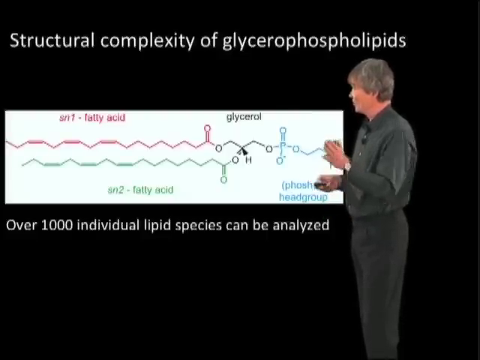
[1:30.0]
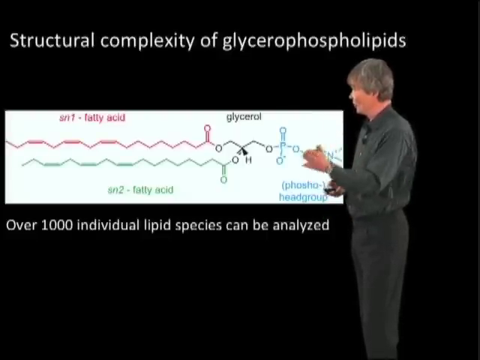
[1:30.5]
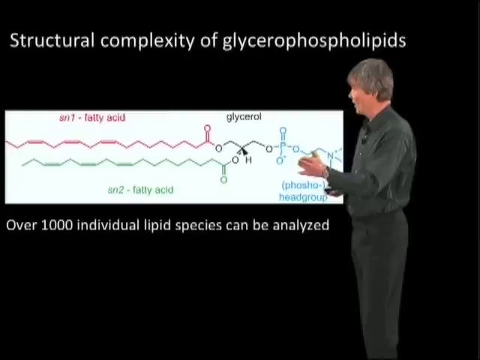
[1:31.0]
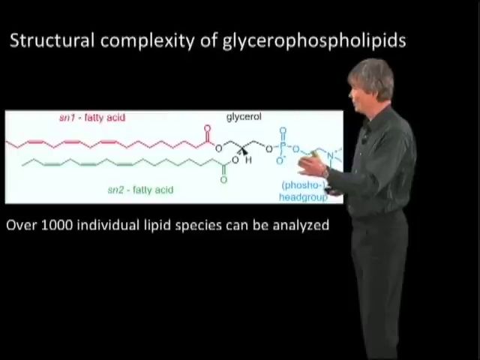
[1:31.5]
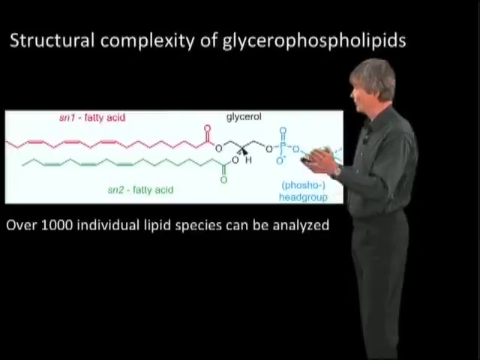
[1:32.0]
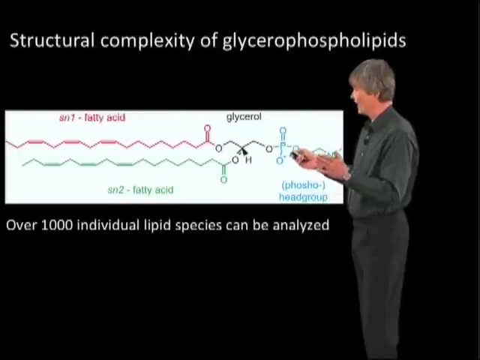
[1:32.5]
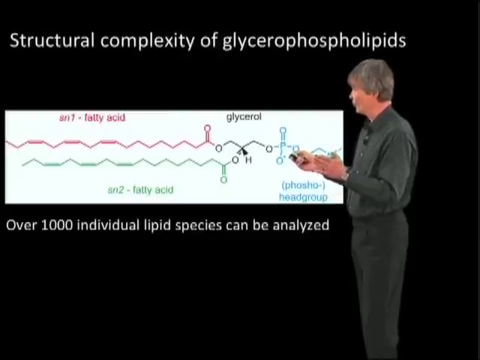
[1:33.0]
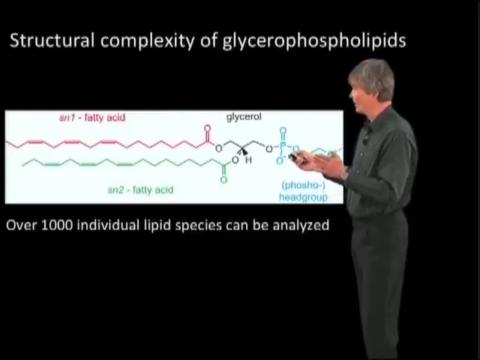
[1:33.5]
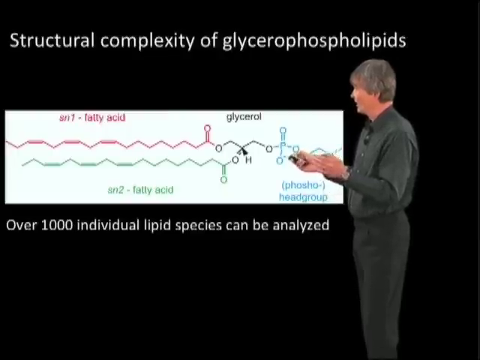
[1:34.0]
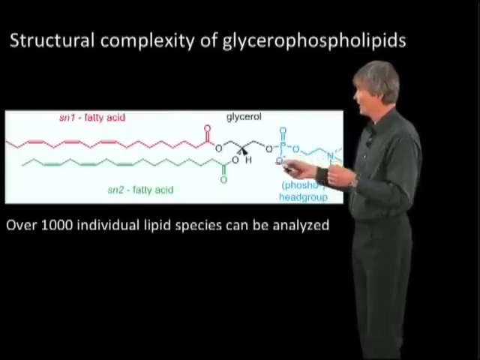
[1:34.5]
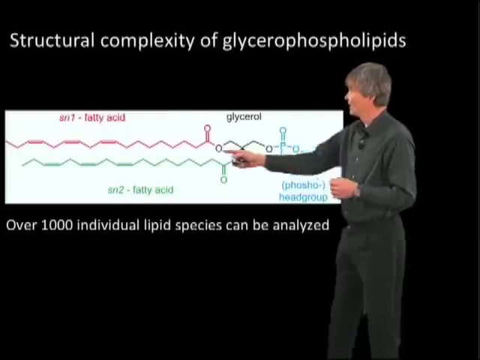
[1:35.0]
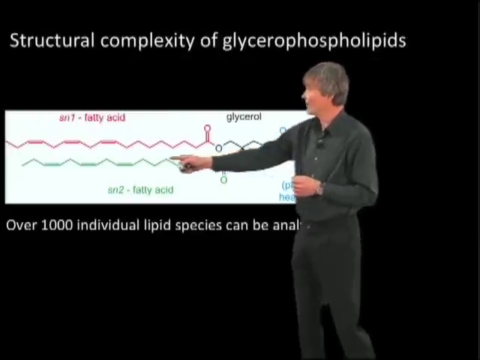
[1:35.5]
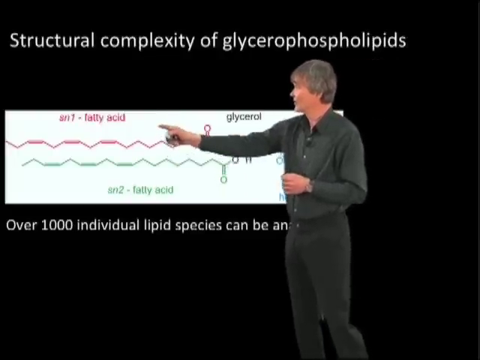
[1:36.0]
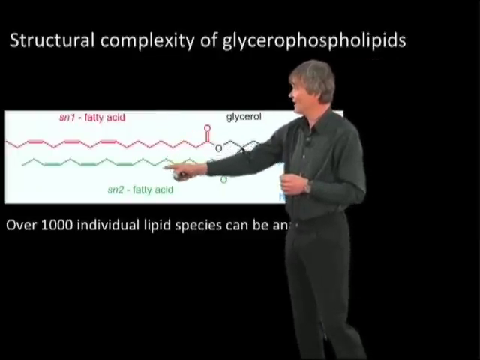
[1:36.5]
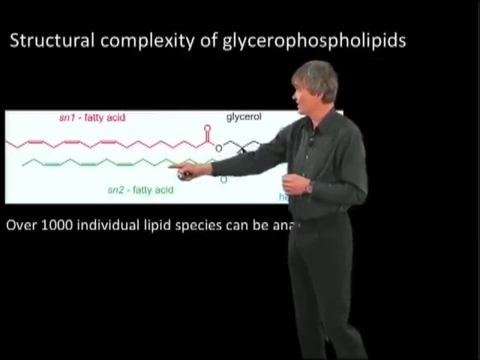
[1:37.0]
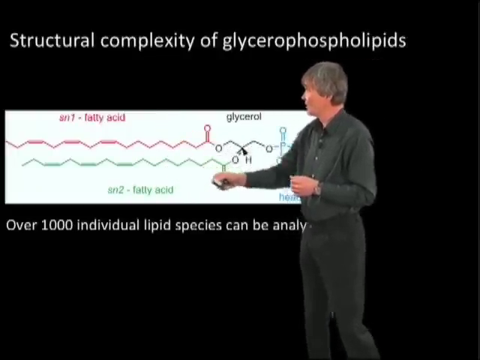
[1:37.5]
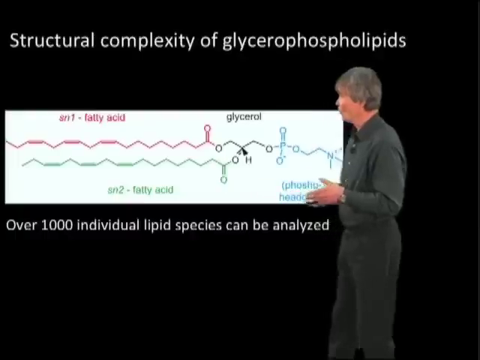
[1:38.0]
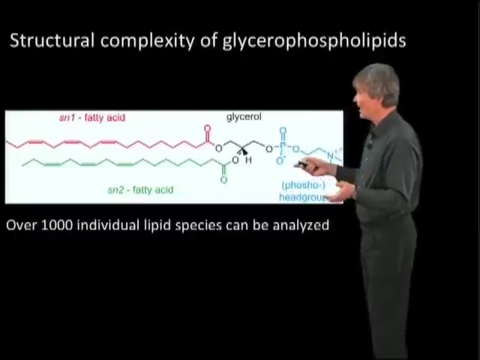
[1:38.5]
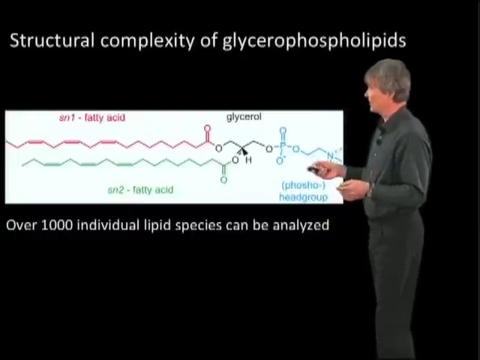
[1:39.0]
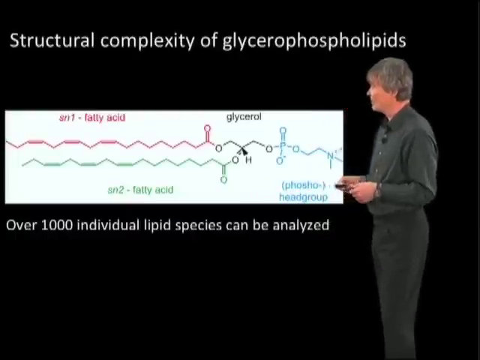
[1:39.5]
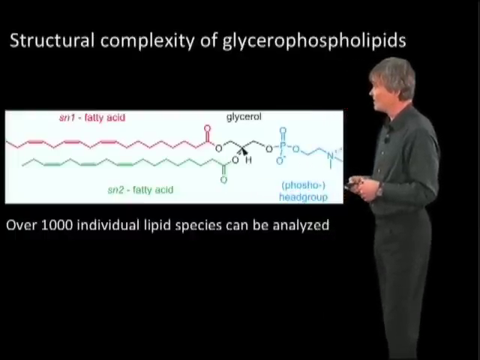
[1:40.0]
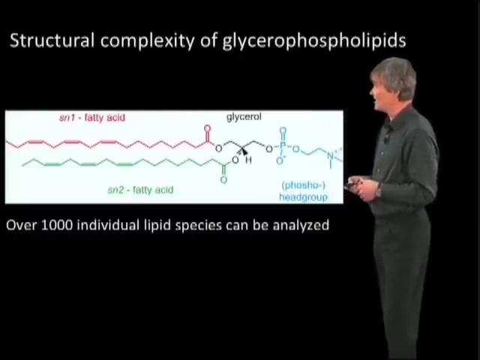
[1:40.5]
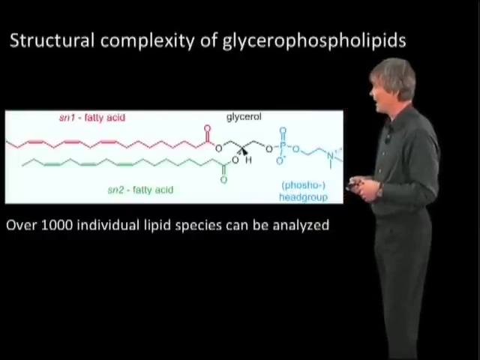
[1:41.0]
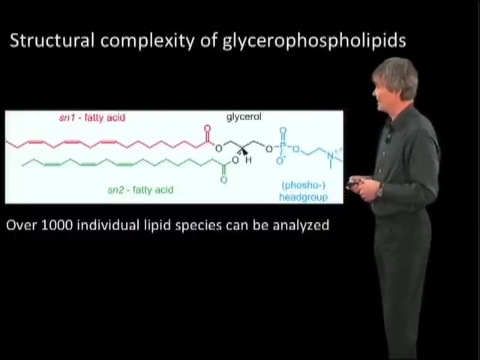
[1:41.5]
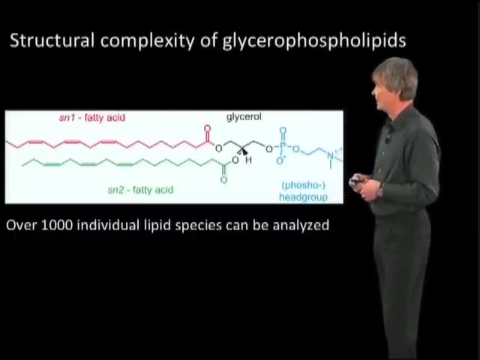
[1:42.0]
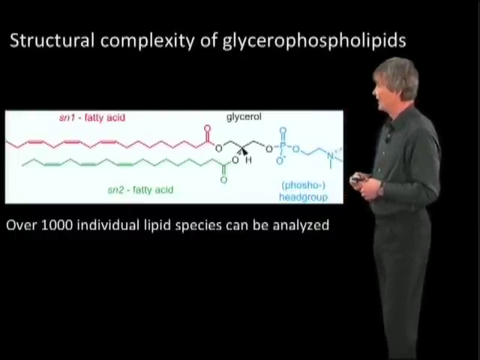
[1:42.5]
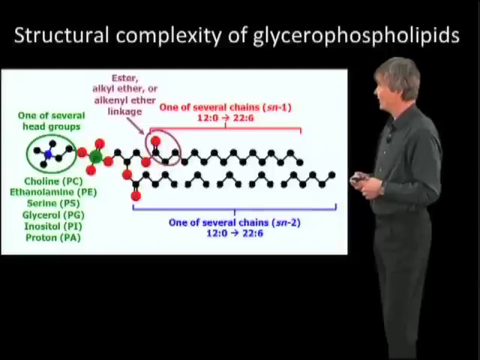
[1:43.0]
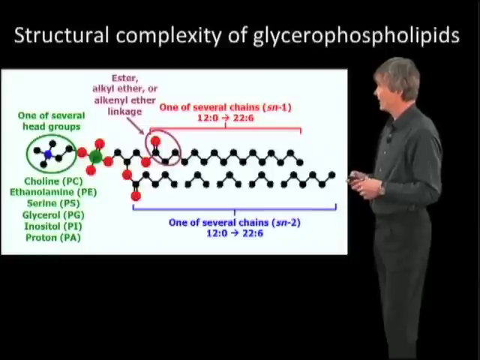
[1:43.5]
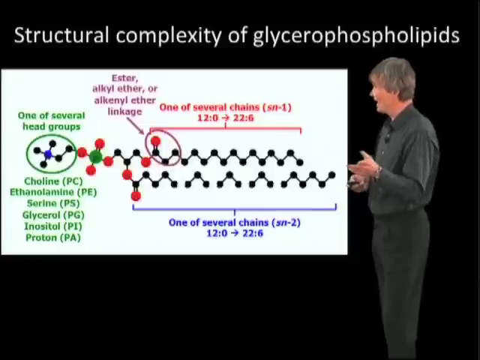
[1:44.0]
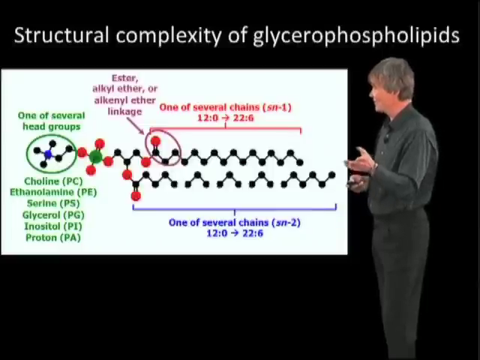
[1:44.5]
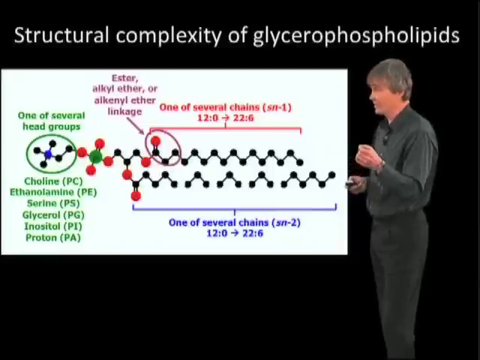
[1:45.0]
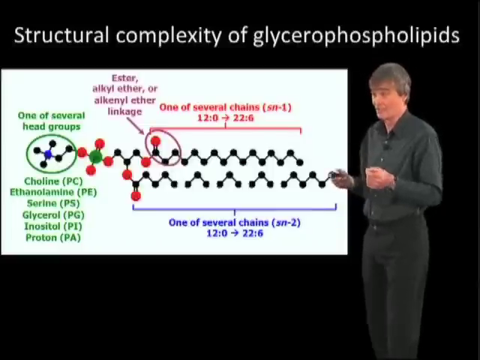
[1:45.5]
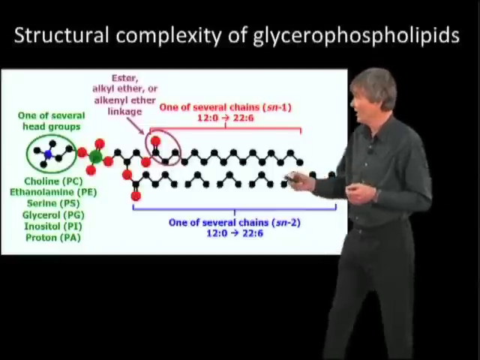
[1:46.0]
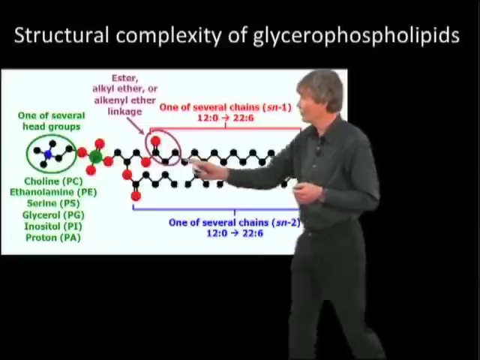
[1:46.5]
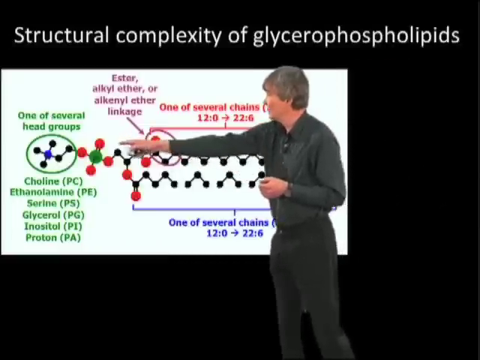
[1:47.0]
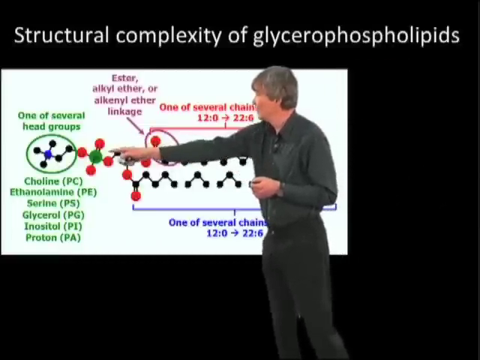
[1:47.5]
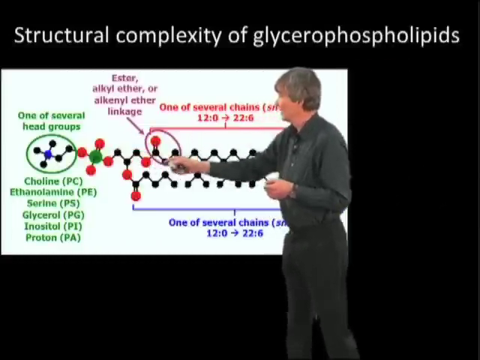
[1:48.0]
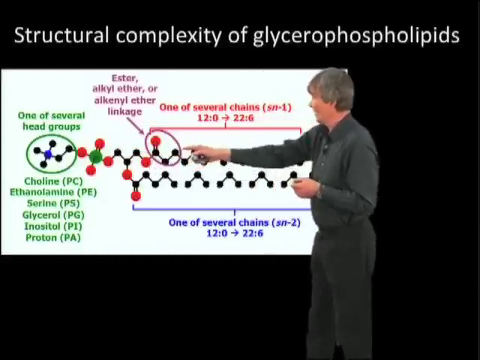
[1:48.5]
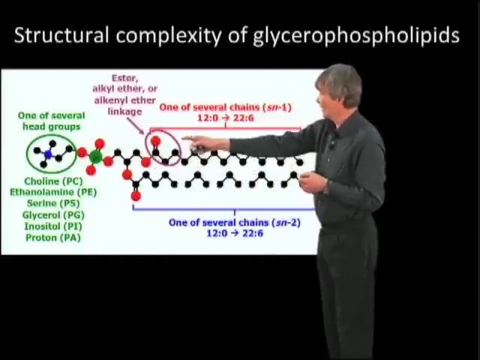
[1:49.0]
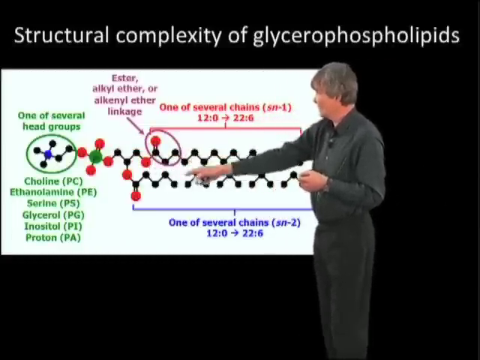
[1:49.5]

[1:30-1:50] The glycerophospholipid diagram shows a red crooked line, a fatty acid labeled SN1, and a green crooked line, another fatty acid labeled SN2. Each has a double-bonded oxygen, and they are attached to a glycerol molecule and a phospho head group. The slide also says "over 1000 individual lipid species can be analyzed." The instructor points at the red fatty acid line, the green fatty acid tail and the phospho head group, looking at the diagram rather than the camera. The next slide shows another 2D diagram of glycerophospholipids with more labels, and he clicks on one of the heads and the top tail.